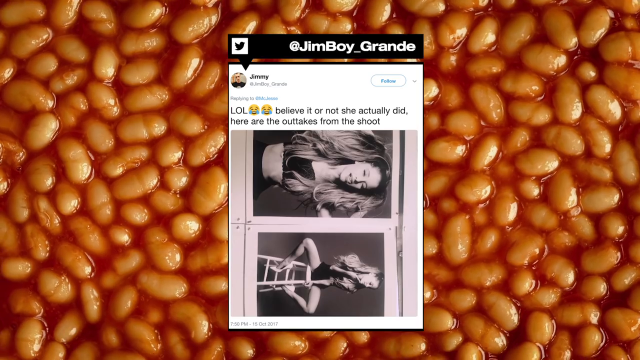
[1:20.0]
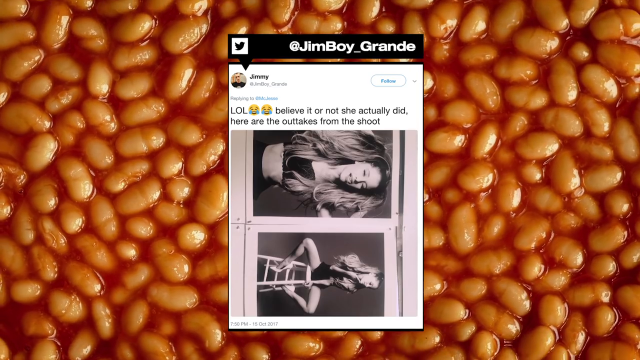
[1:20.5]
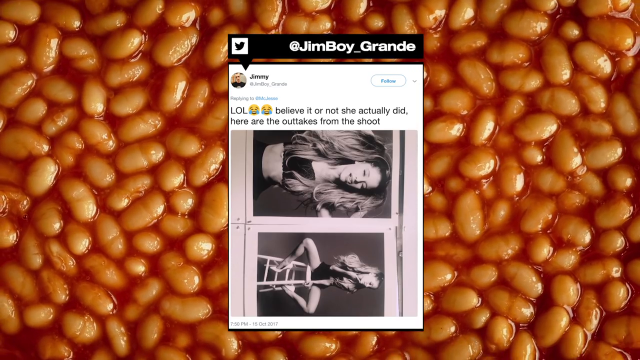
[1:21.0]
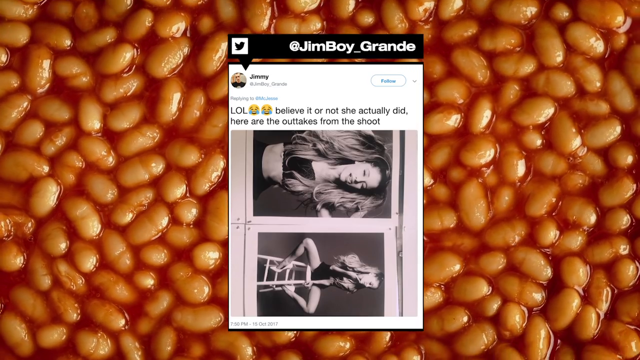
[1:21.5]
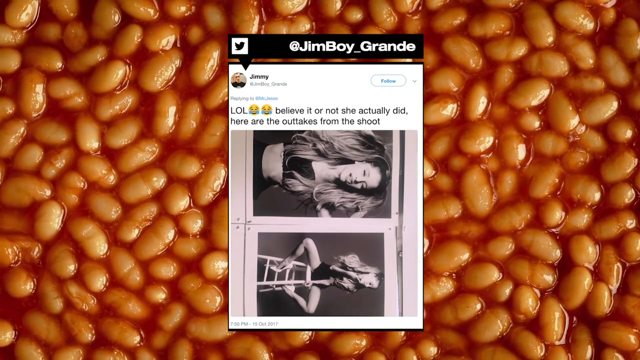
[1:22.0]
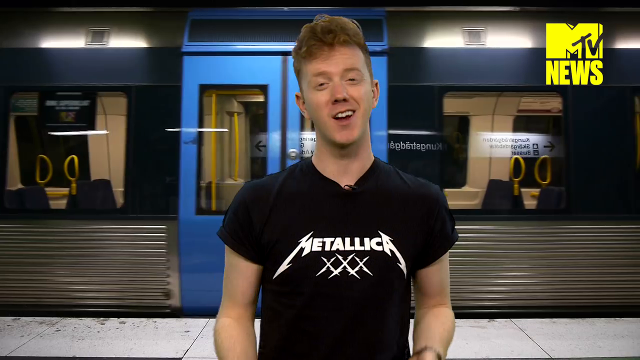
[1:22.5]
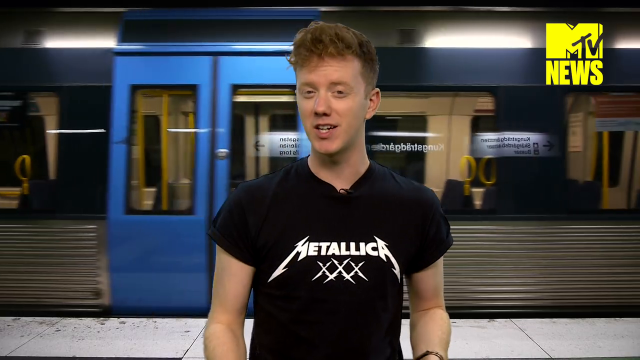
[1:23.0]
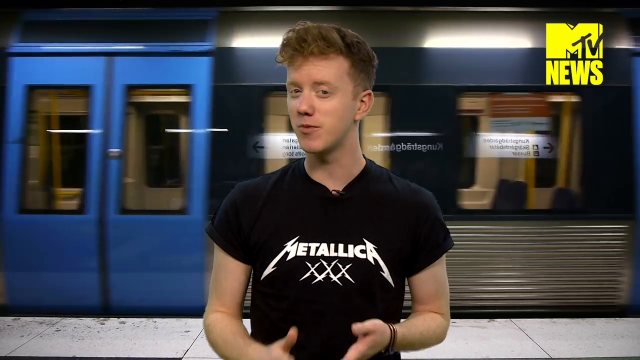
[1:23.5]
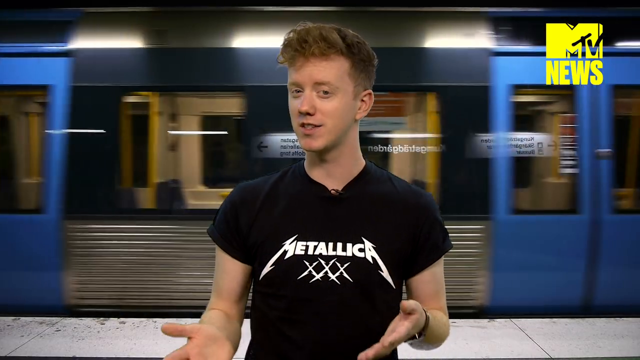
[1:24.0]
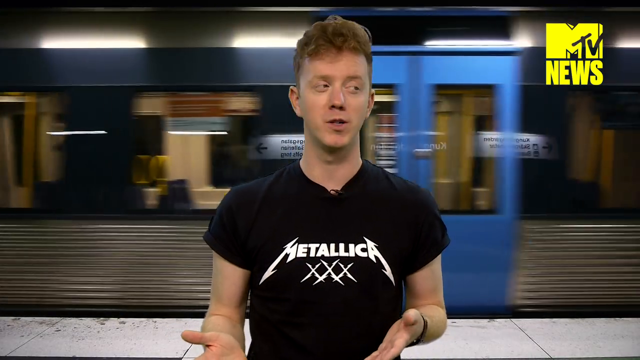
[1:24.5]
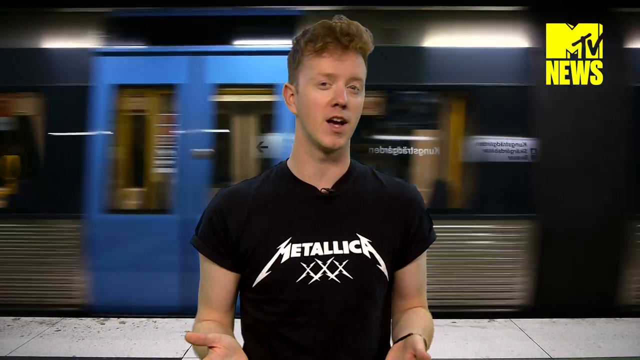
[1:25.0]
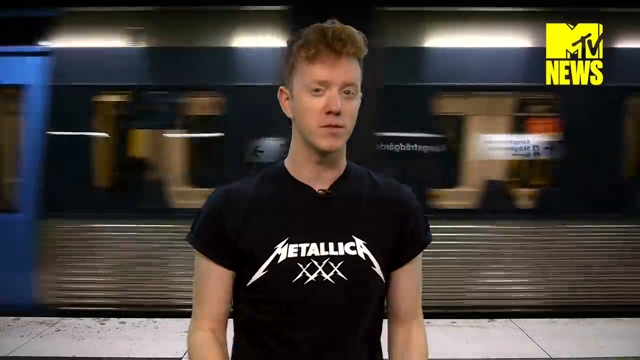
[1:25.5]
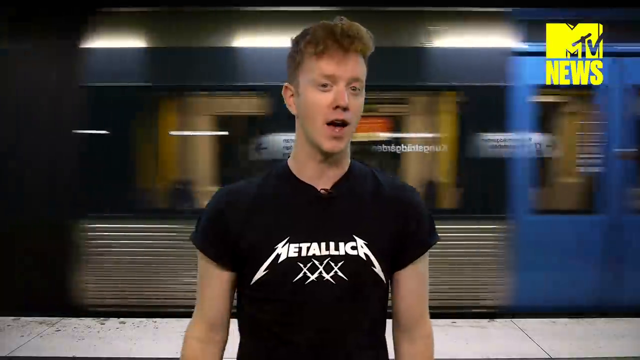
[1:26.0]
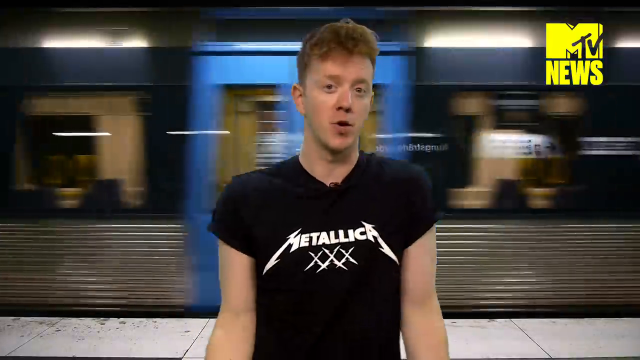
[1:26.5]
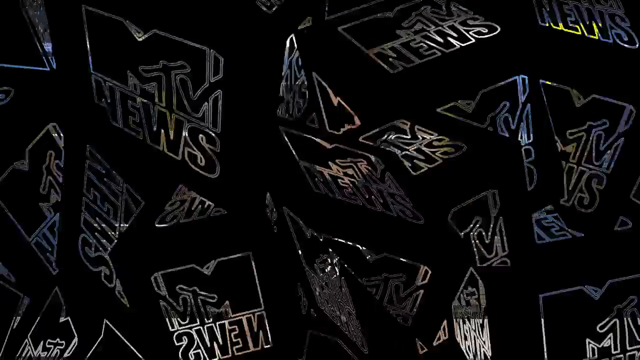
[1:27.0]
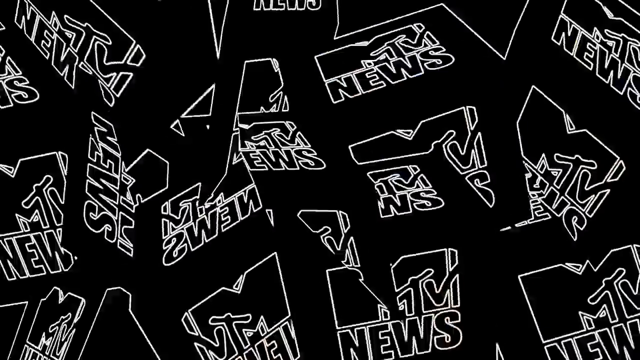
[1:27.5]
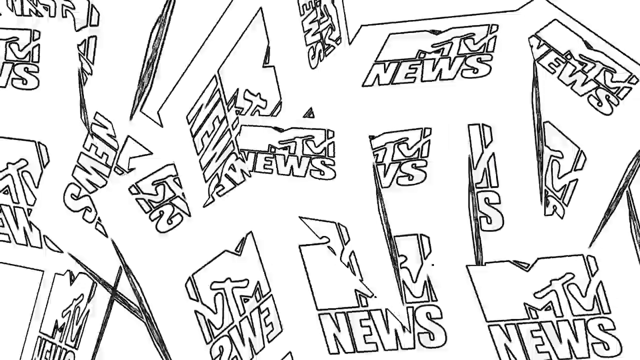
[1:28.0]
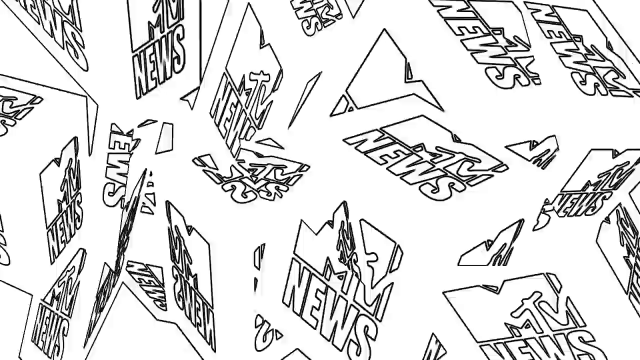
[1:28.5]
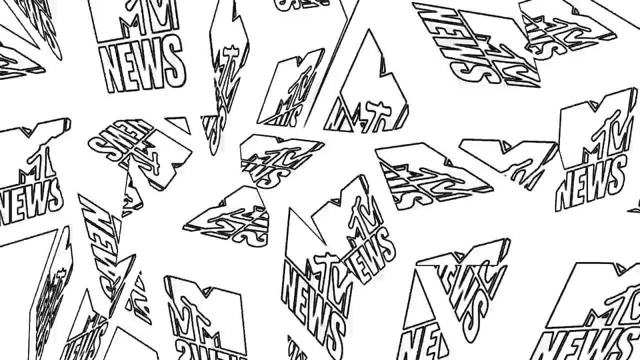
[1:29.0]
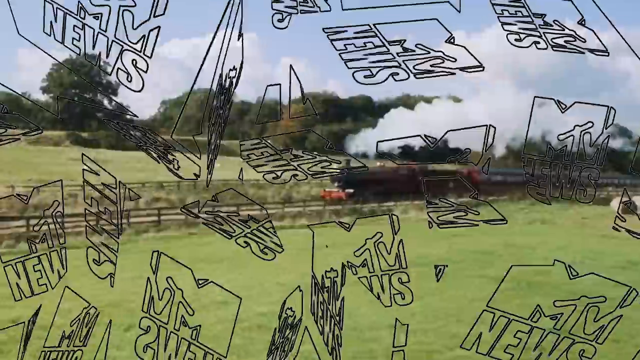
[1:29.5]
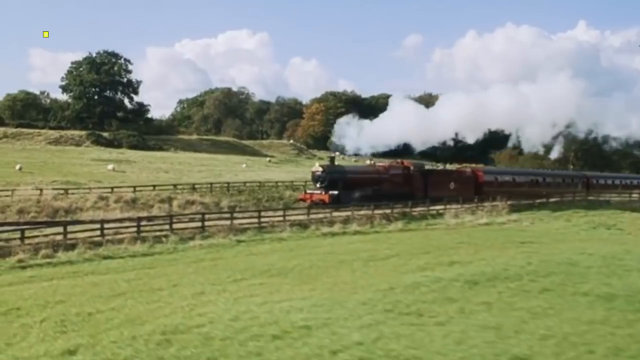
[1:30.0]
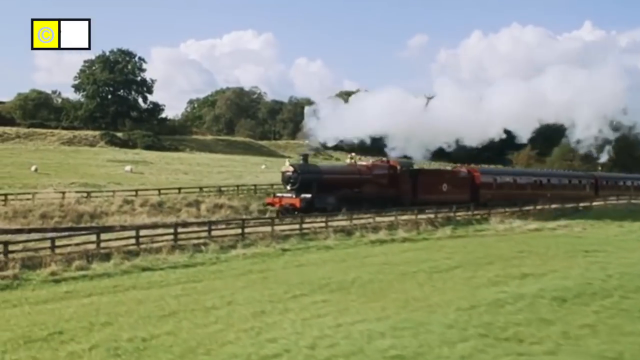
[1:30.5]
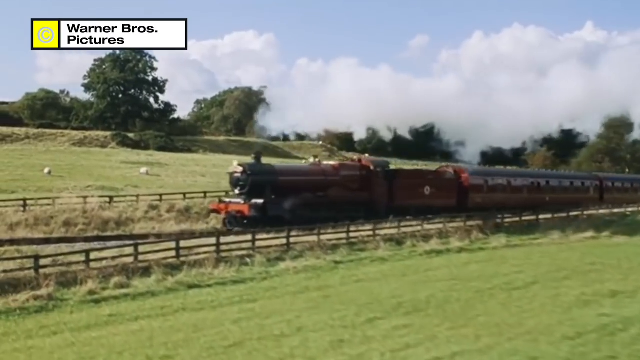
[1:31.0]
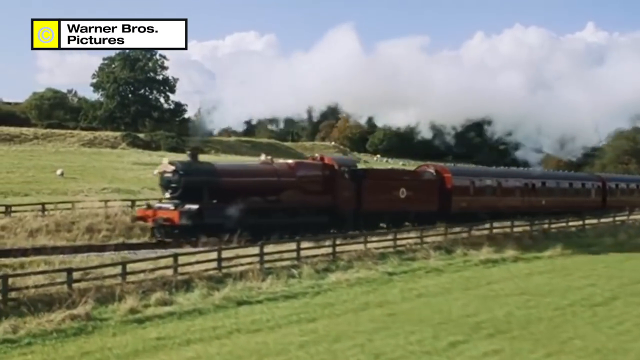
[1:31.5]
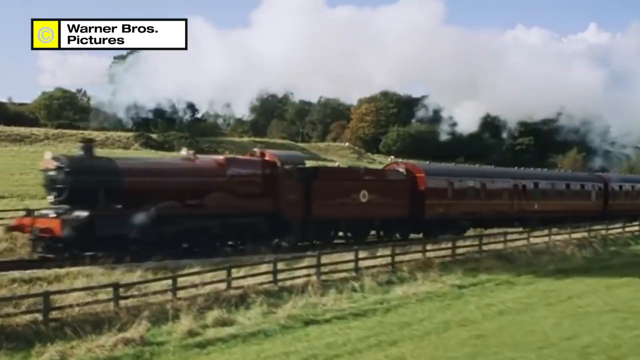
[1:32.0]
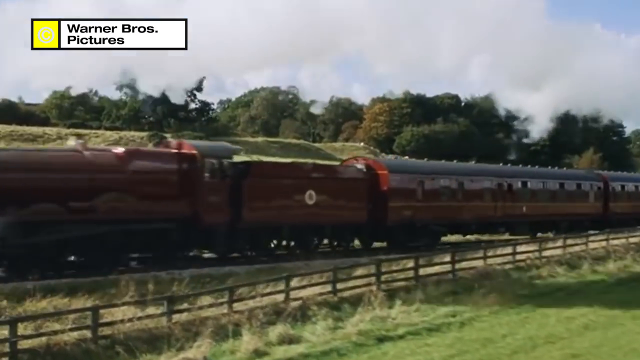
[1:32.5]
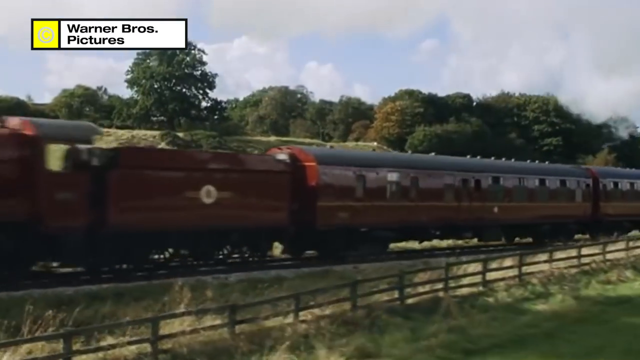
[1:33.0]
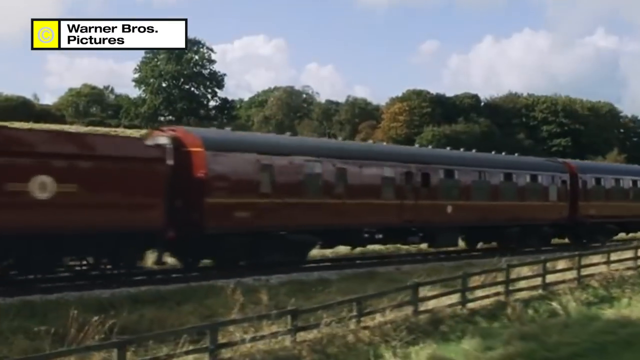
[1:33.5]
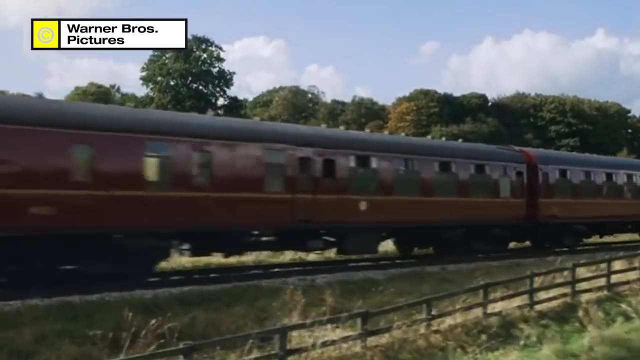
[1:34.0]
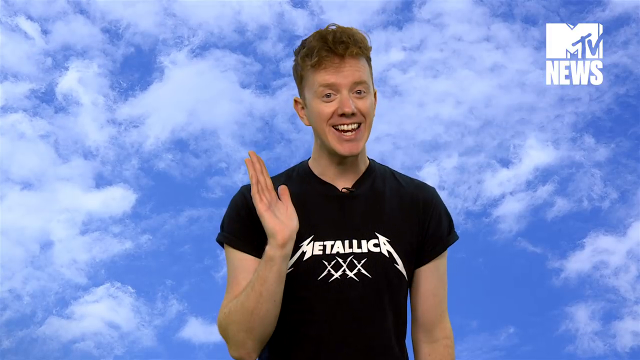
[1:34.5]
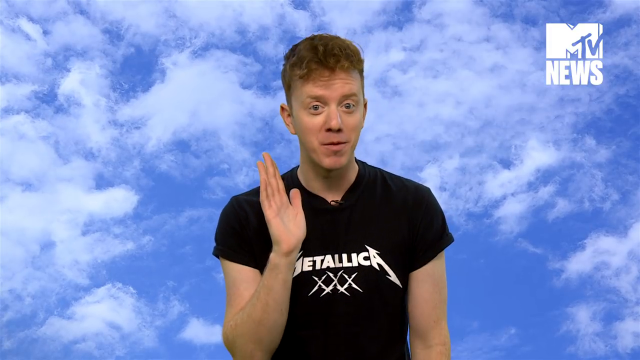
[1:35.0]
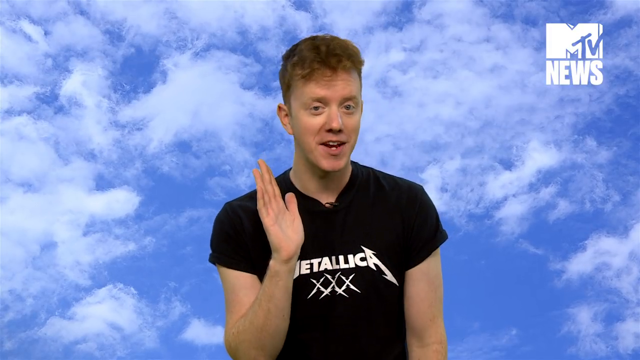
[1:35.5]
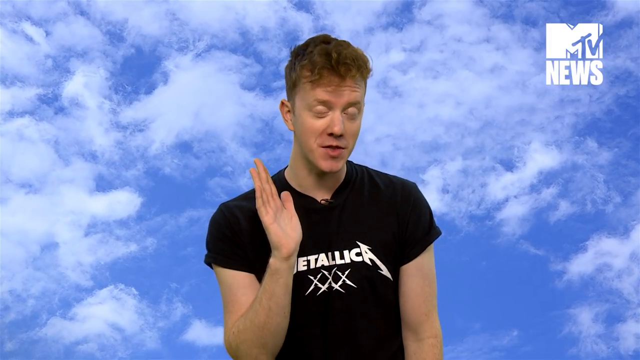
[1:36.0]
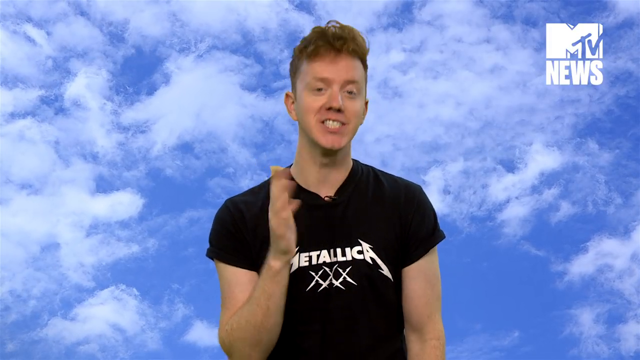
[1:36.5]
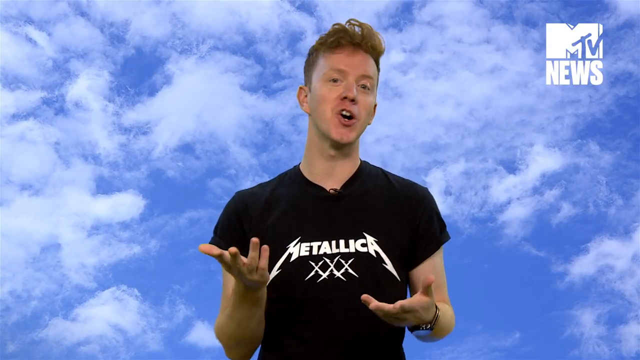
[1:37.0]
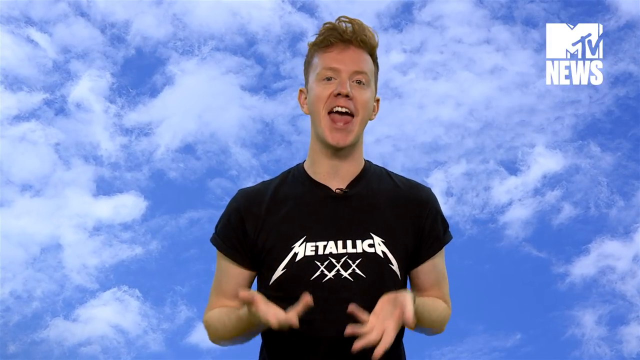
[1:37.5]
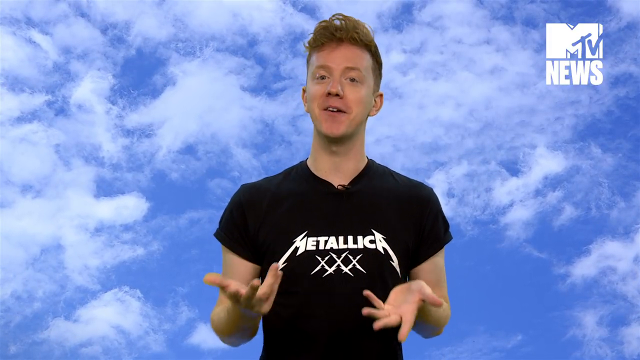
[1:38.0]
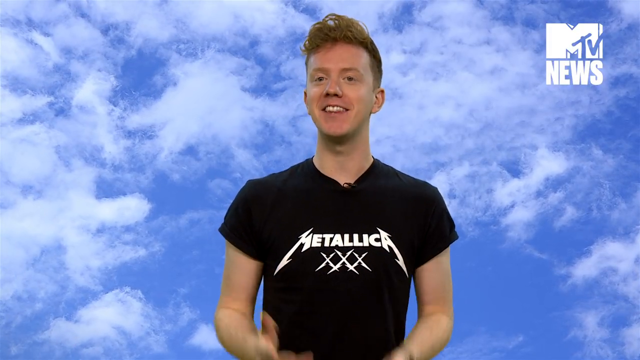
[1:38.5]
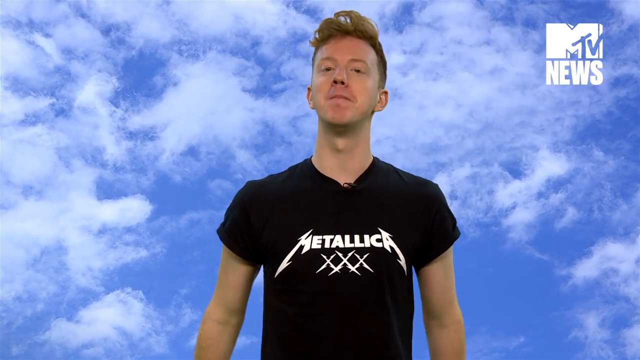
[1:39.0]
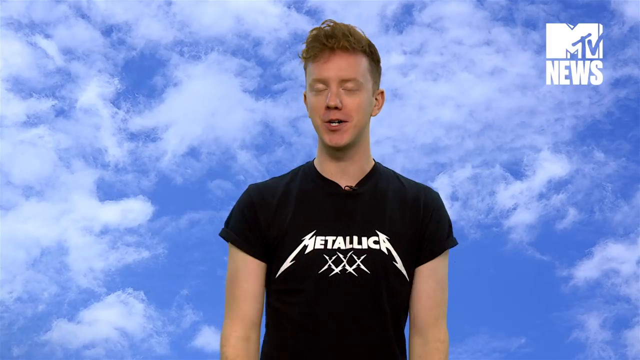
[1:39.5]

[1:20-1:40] The beans background continues with the Twitter post and other social media posts and feeds from different people, shown on a kind of short, mobile-looking screen in front of the beans; one post states that it would be hard to control variables like the stool size. The video returns to the Caucasian man, 20 to 25, with reddish-brown hair, in the black shirt with white Metallica text, with a train kind of moving in the background and the yellow MTV logo in the top right. Next comes an MTV News screen with a bunch of flashing MTV News logos, followed by a screen with "Warner Bros pictures" text in the top left and a kind of captioned Warner Bros logo, and a train is shown. The background then changes to a blue sky with light, fluffy clouds, with the man in the Metallica shirt present.